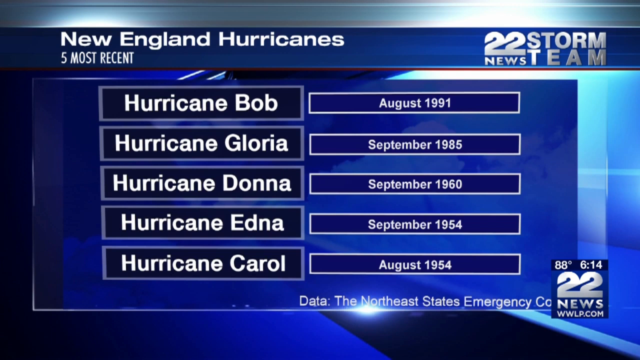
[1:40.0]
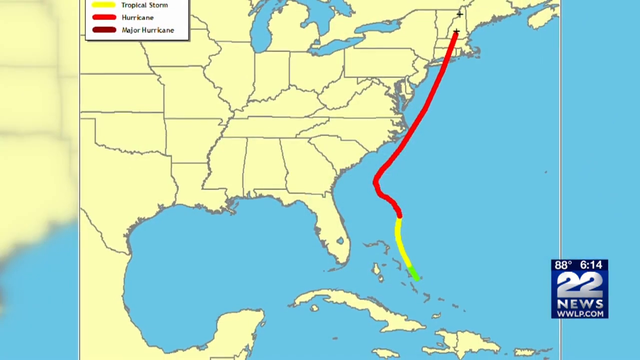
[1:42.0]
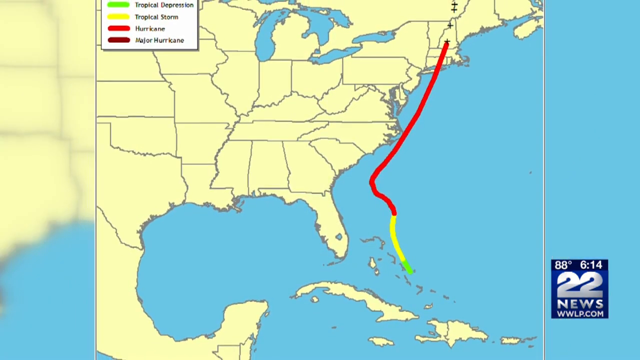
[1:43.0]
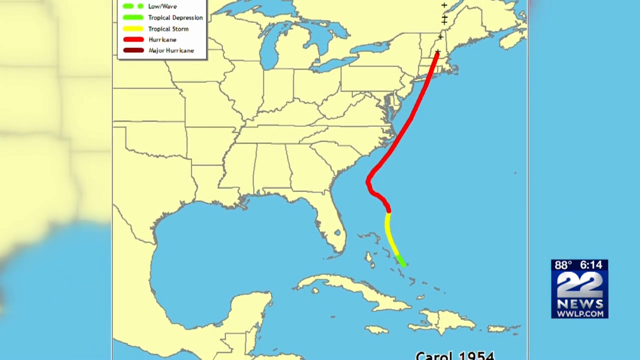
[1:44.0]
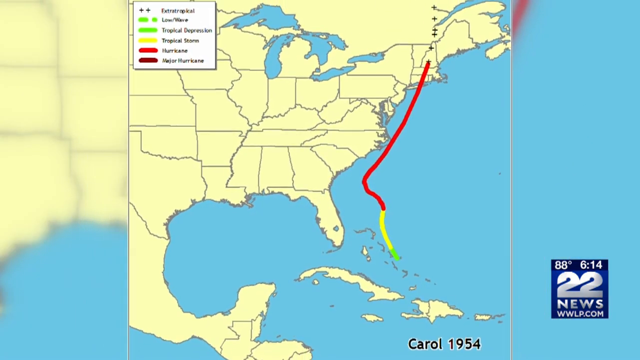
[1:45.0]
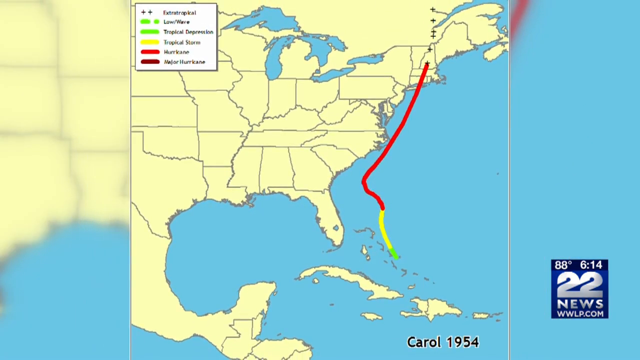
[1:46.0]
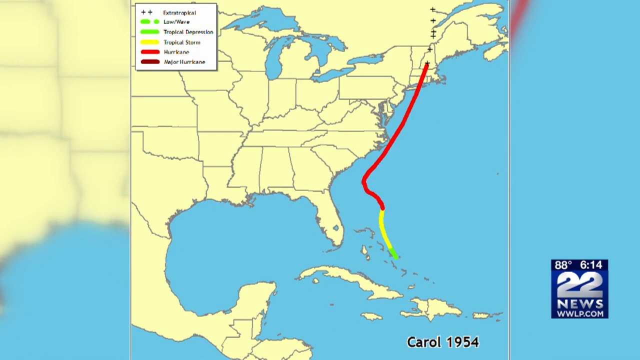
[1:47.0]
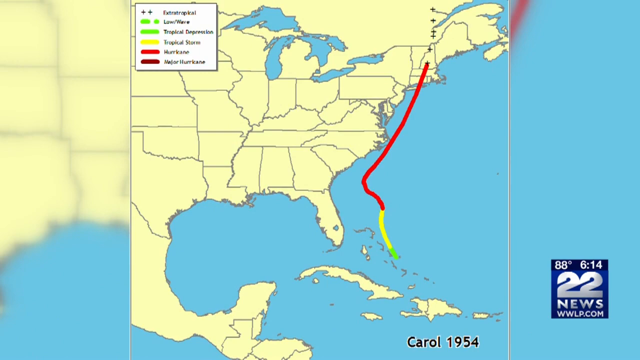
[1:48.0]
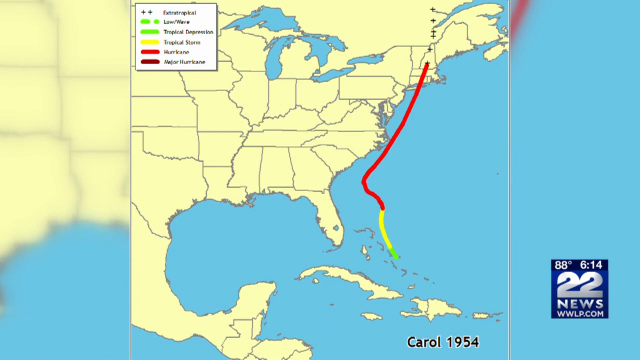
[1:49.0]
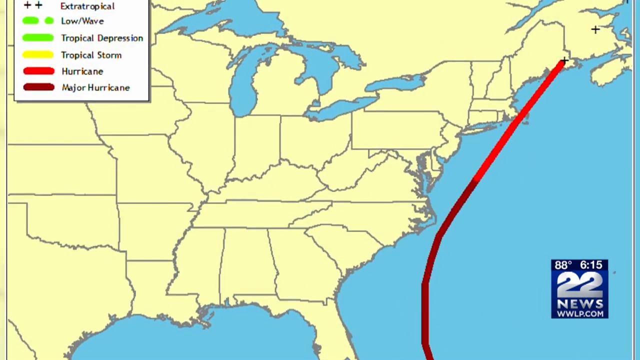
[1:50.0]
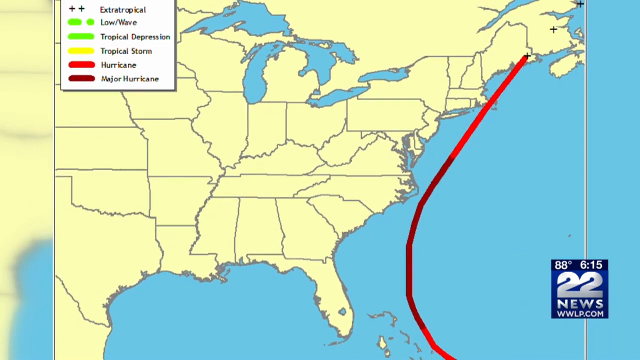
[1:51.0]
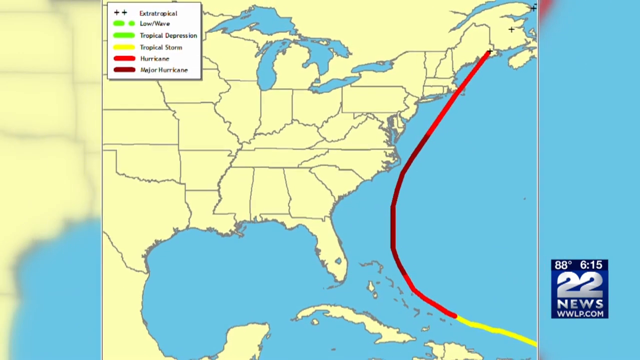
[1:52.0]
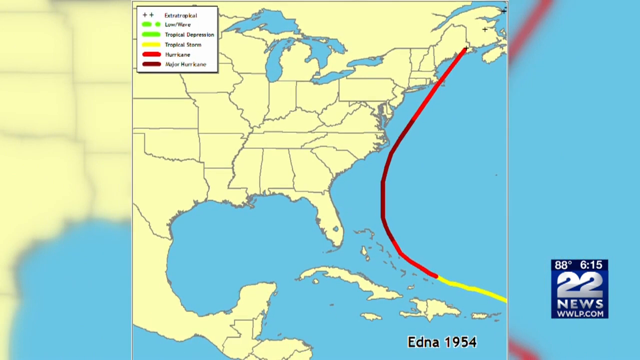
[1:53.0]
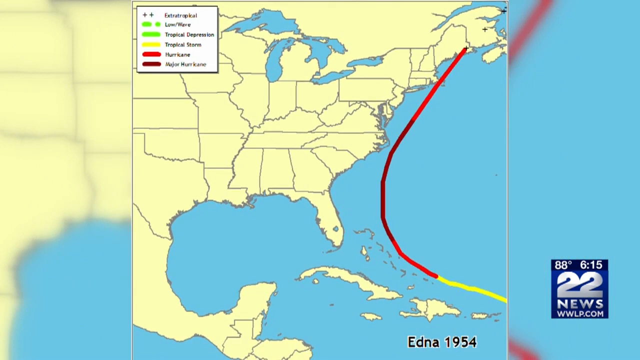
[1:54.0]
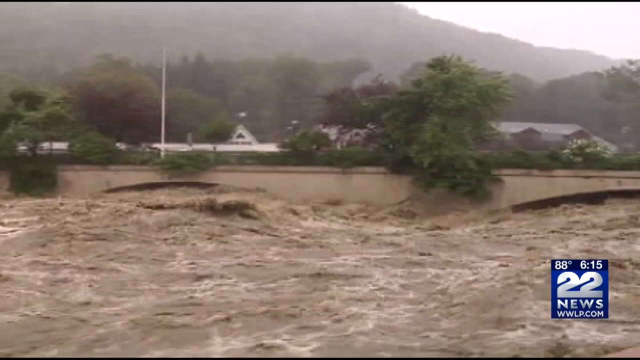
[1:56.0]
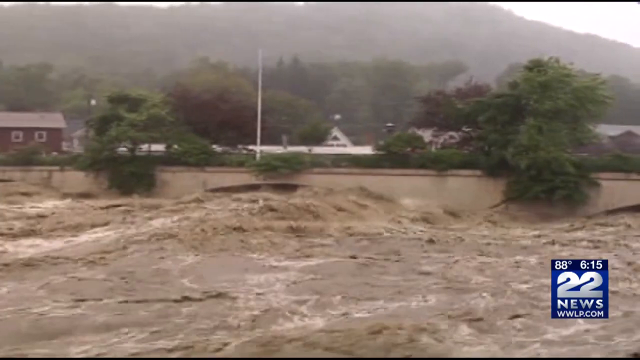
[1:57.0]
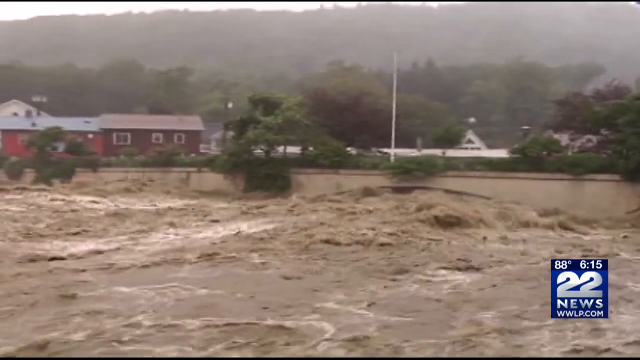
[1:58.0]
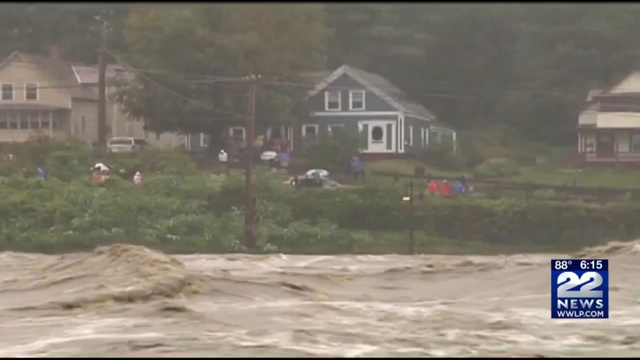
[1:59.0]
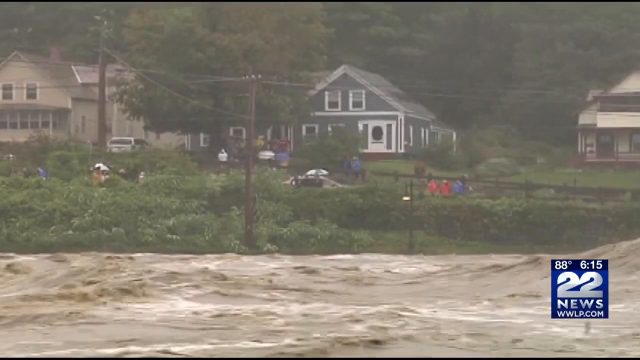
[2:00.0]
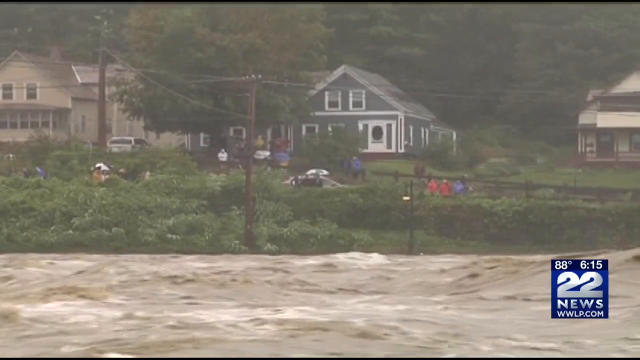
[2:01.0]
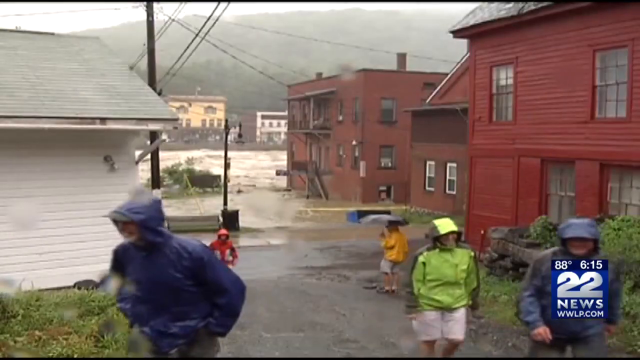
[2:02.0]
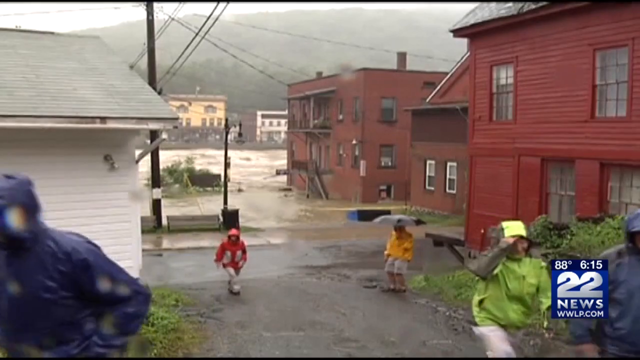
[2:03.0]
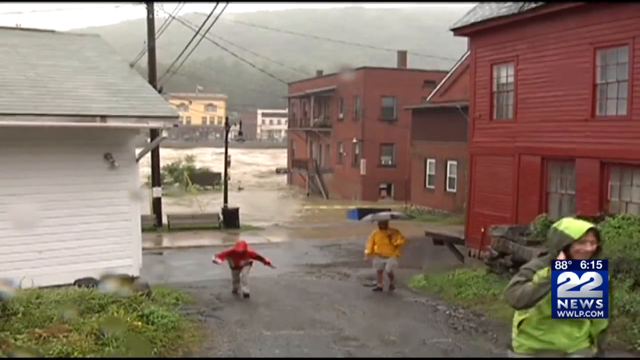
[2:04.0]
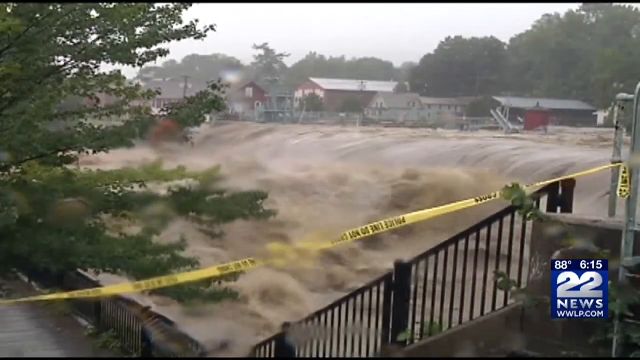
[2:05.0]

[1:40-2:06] A display lists New England hurricanes and when they happened: Hurricane Bob, August 1991; Hurricane Gloria, September 1985; Hurricane Donna, September 1960; Hurricane Edna, September 1954; and Hurricane Carol, August 1954, described as the five most recent, with data from the Northeast State Emergency Plan. A current of water is shown. A map shows the affected places of the hurricane, with areas marked in blue, red, dark red, green and mint yellow, and symbols for the affected places. Flooded houses submerged in water appear, with people walking away from the flooded places, and the damage to the houses is shown.